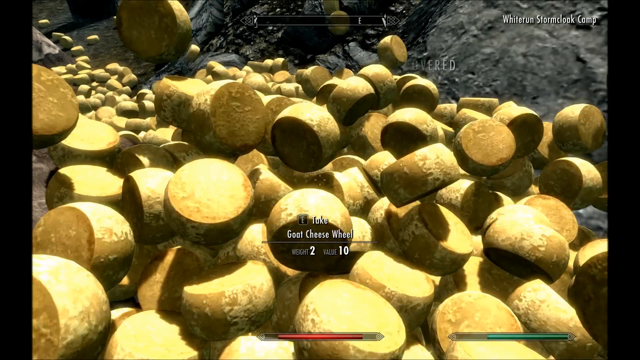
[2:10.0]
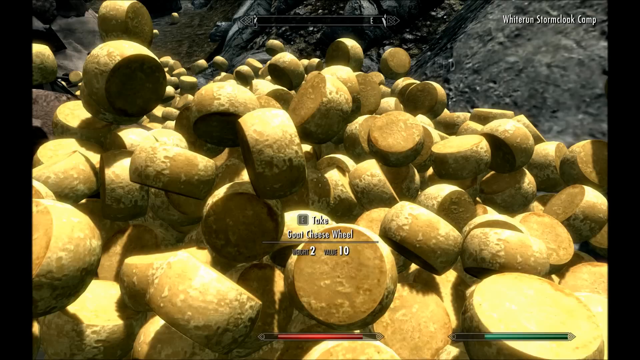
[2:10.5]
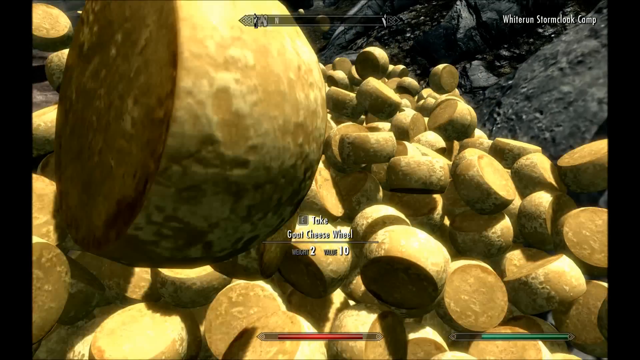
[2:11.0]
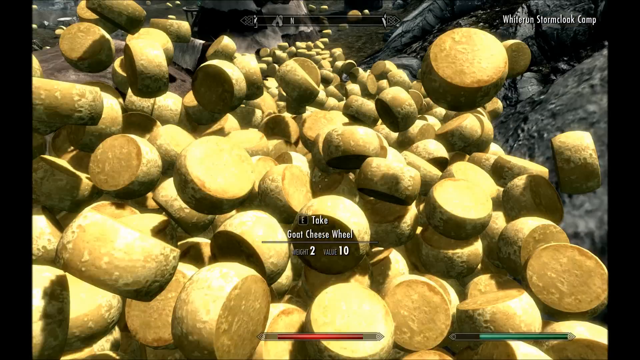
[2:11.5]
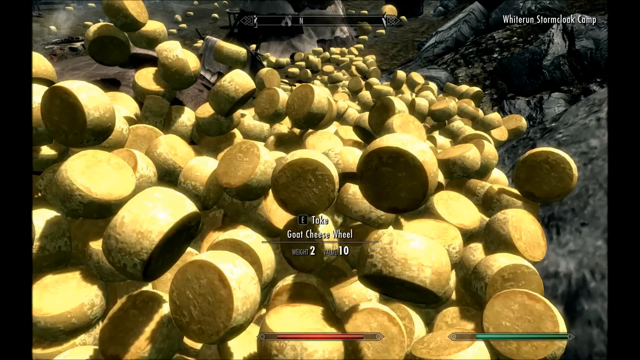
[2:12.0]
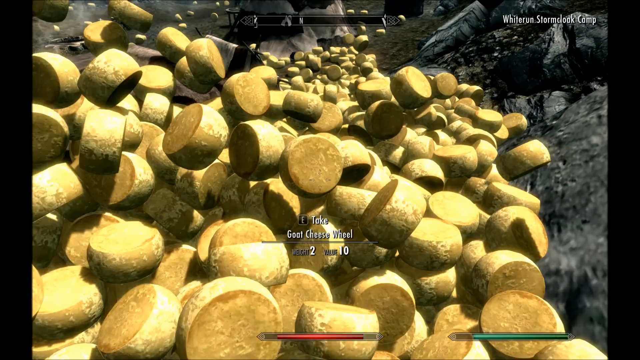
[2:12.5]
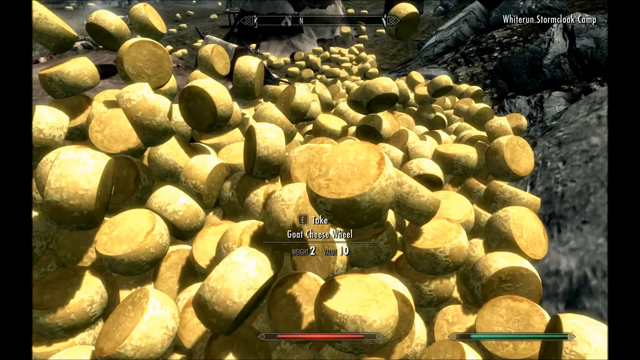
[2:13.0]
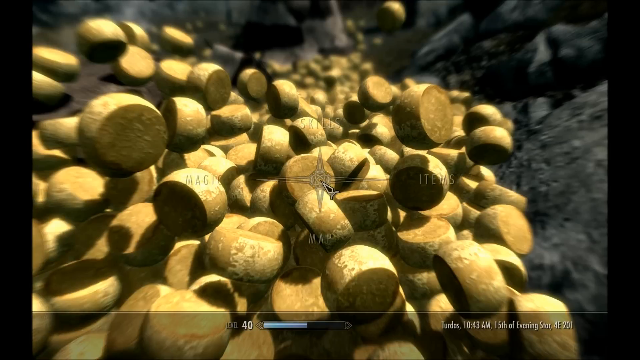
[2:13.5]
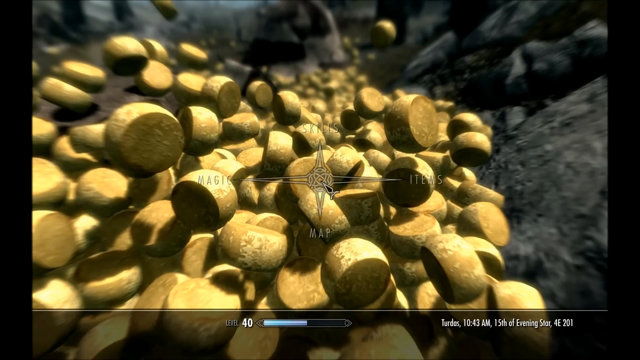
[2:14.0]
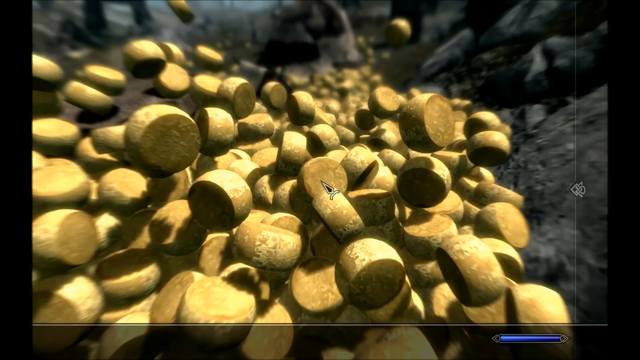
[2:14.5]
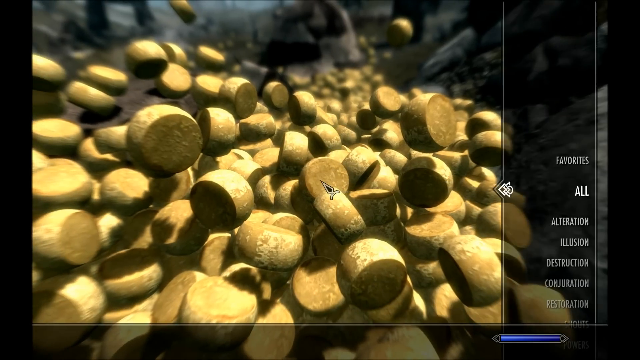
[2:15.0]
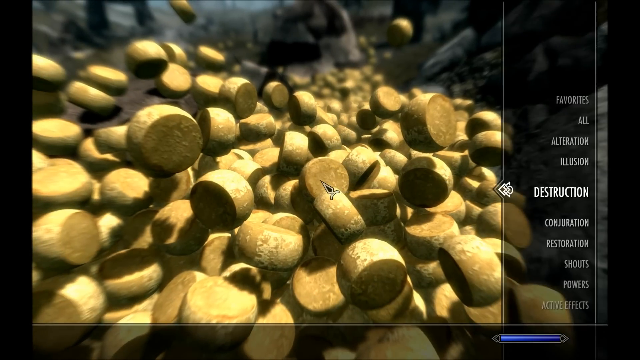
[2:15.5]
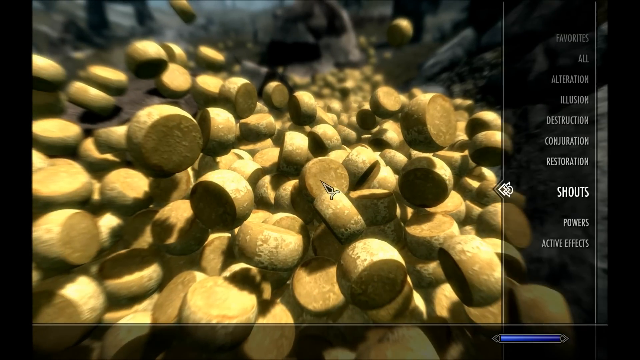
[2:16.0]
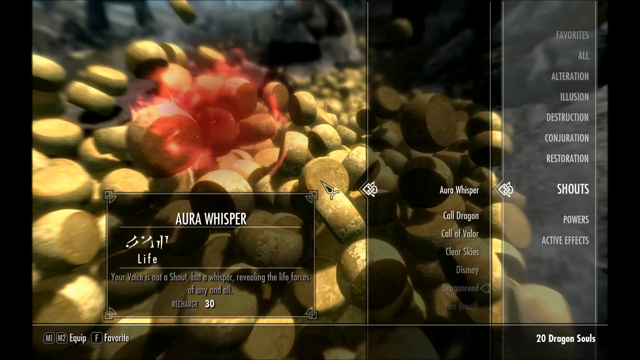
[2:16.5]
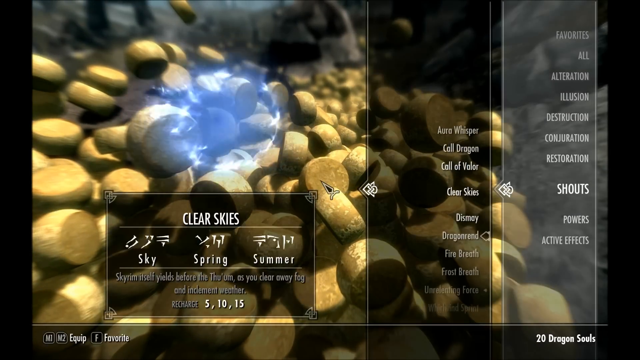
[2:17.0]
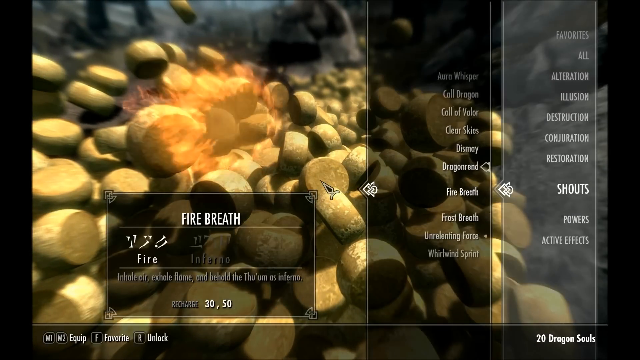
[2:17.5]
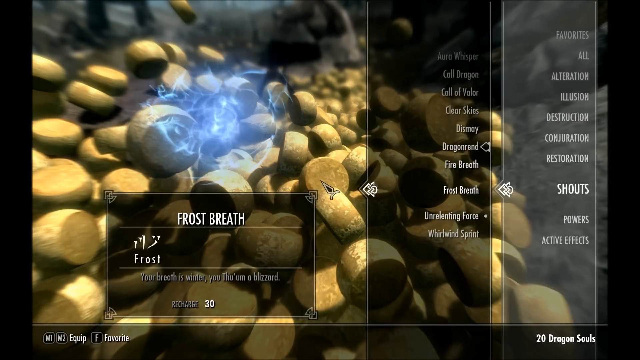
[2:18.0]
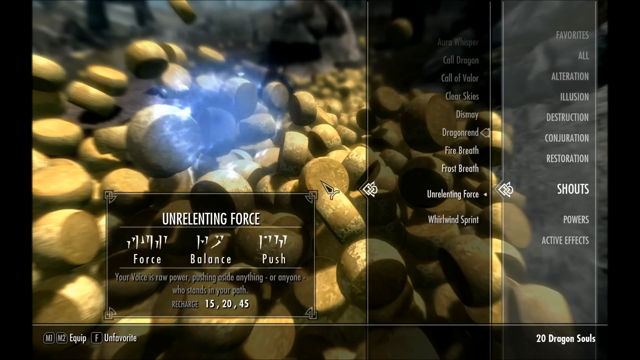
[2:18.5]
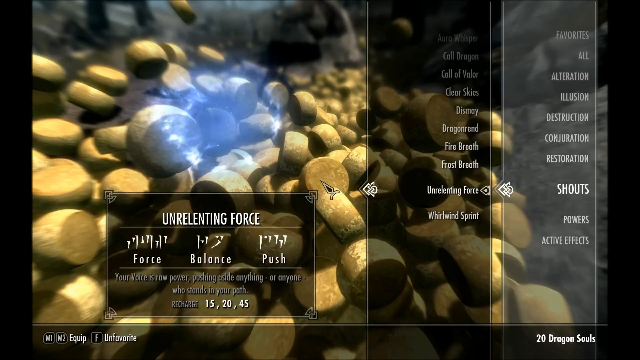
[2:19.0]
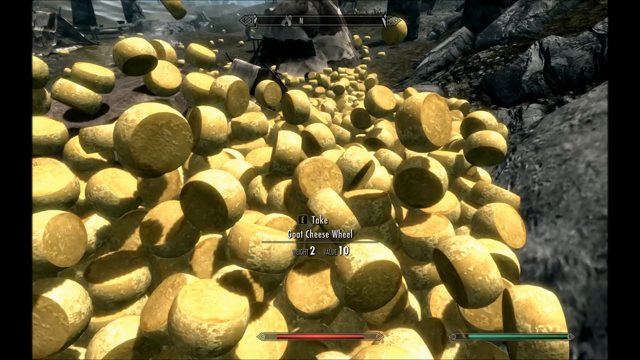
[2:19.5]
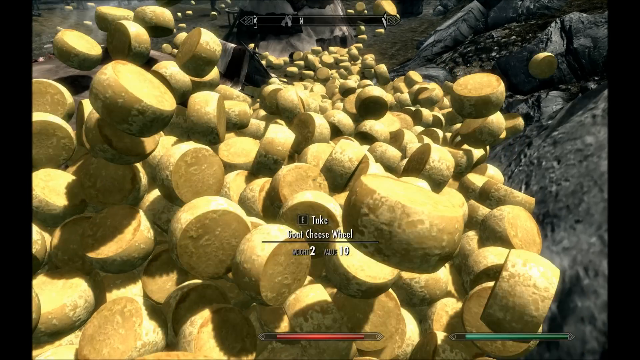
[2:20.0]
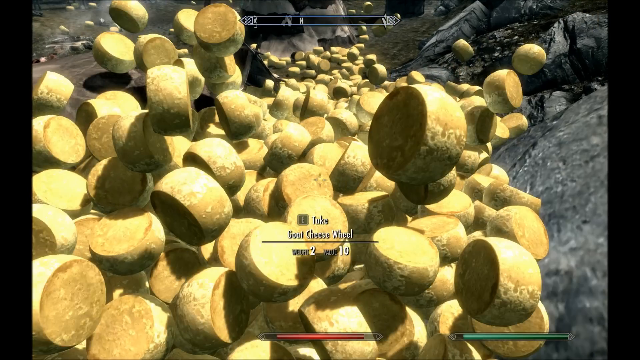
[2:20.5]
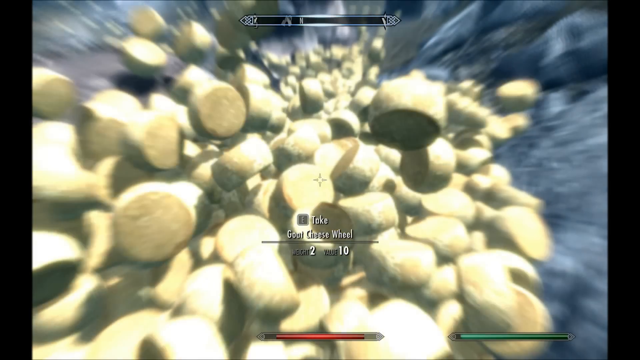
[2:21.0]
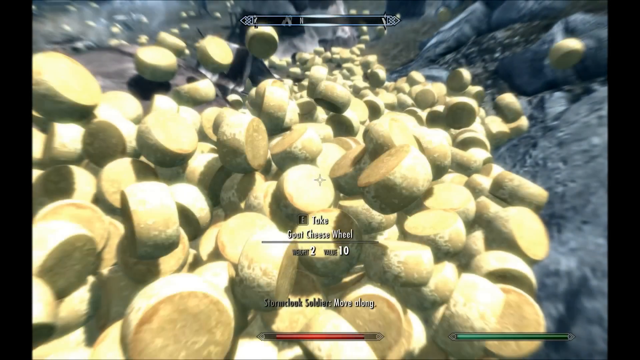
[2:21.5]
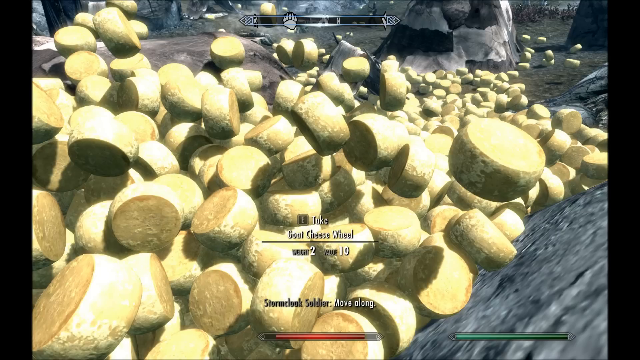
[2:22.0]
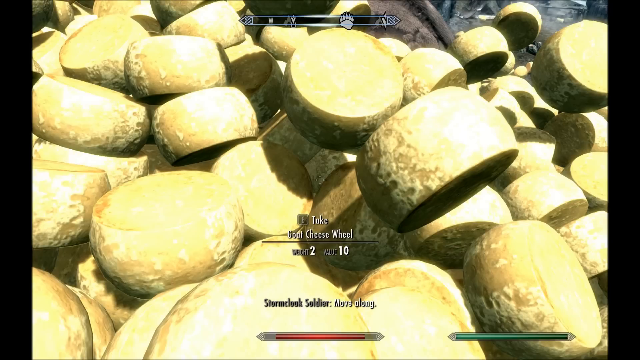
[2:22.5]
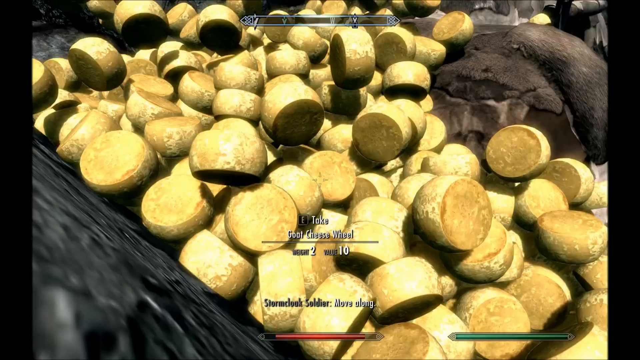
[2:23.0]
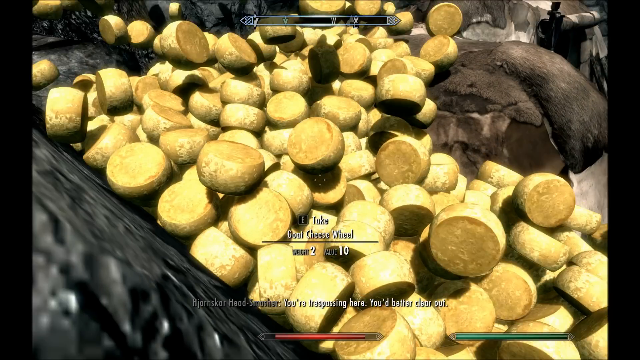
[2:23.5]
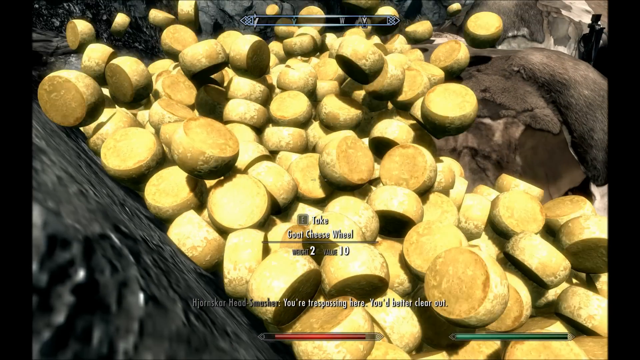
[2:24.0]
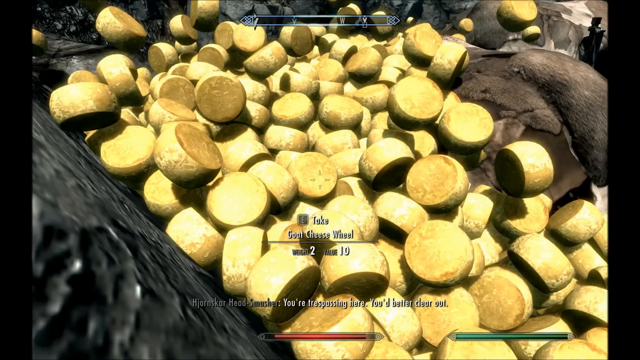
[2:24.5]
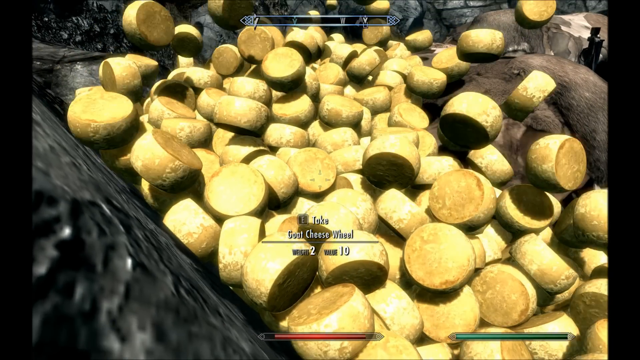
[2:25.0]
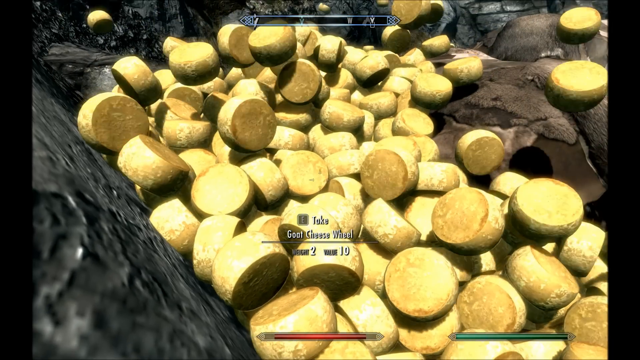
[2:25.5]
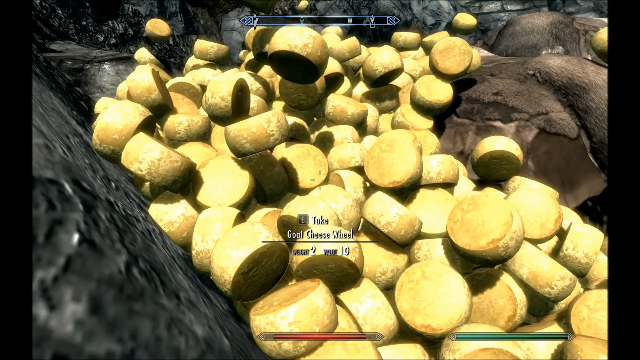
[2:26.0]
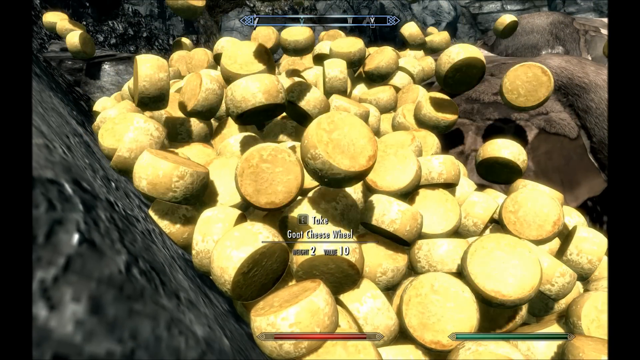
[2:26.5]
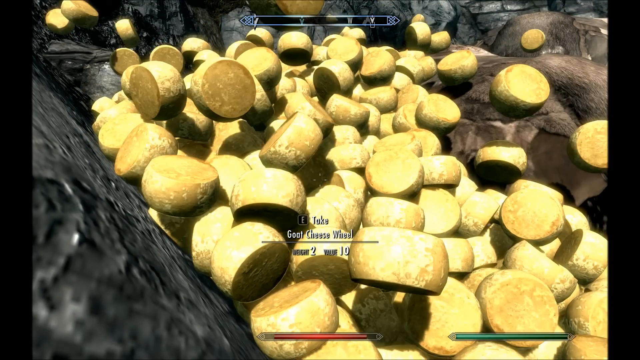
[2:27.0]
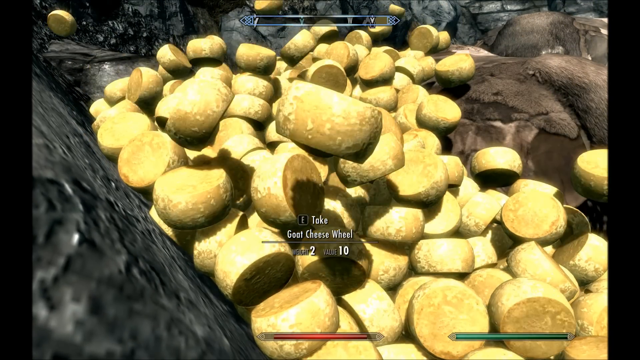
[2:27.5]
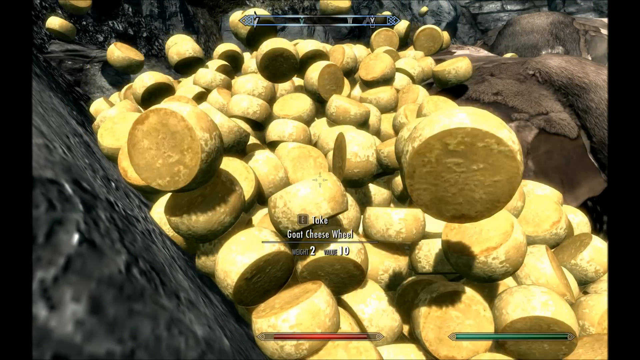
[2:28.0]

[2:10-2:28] The scene starts with a bunch of what look like cheese wheels. A menu pops up on the right-hand side of the screen with the words "Favorites, all, alteration, illusion, destruction, conjuration, restoration, shouts, powers, active effects". Another menu then pops out beyond that menu for the Shouts, with multiple menu items arranged horizontally. On the bottom left-hand side a larger menu shows what is being chosen on the menu on the right. The cheese wheels take up most of the image, and wording in the center reads "Take cheese wheel". The camera kind of turns around so that it is like the character is underneath the cheese wheels, and they are turning.